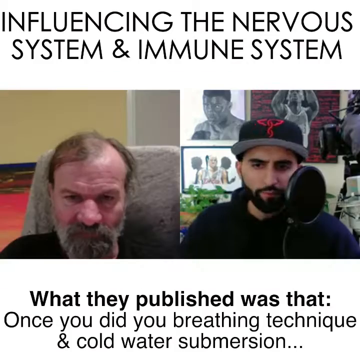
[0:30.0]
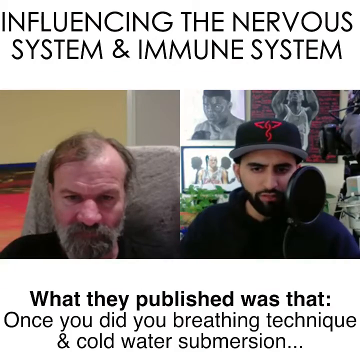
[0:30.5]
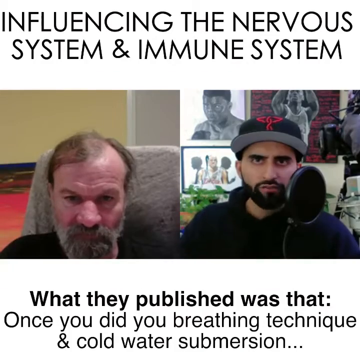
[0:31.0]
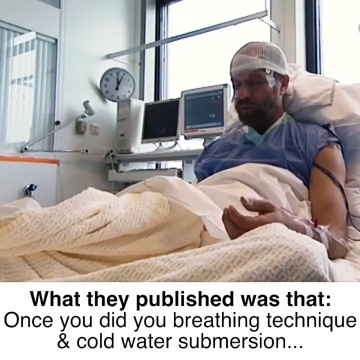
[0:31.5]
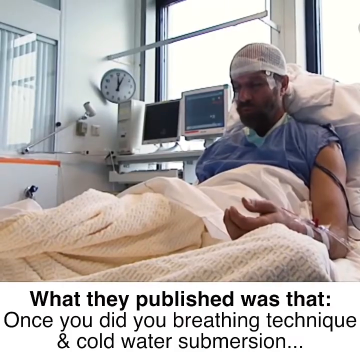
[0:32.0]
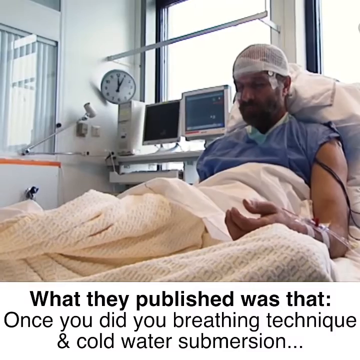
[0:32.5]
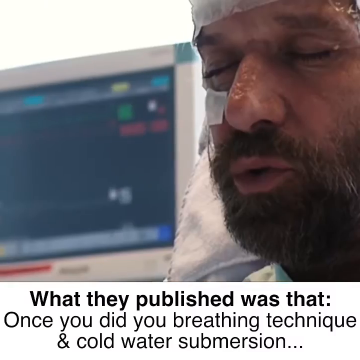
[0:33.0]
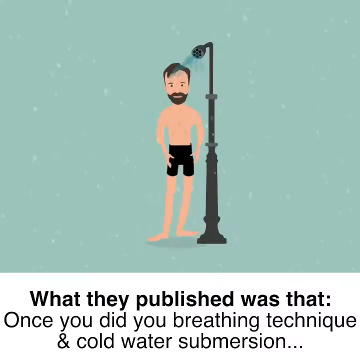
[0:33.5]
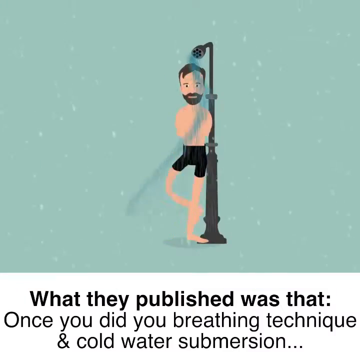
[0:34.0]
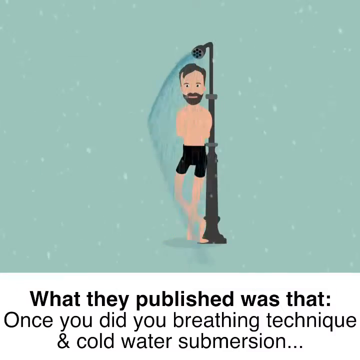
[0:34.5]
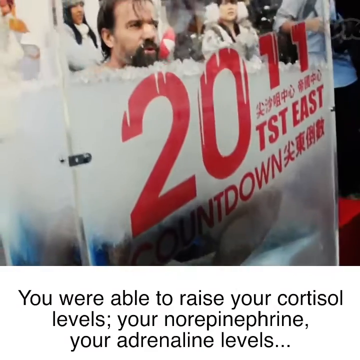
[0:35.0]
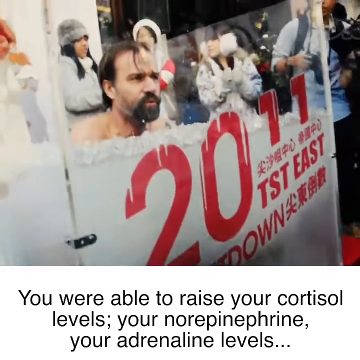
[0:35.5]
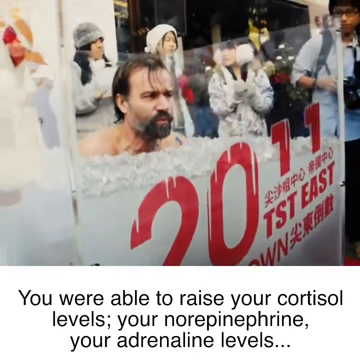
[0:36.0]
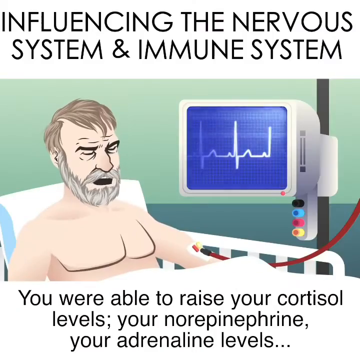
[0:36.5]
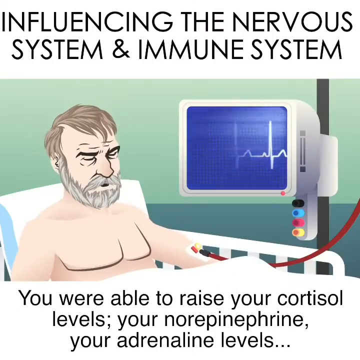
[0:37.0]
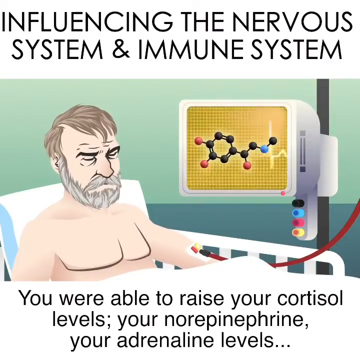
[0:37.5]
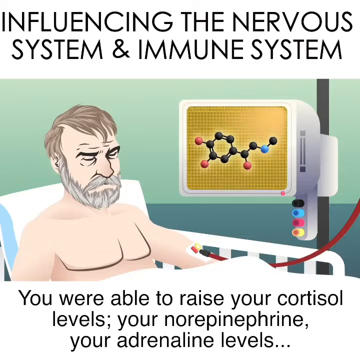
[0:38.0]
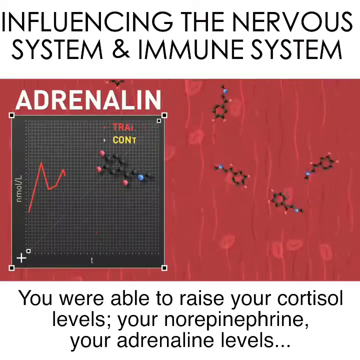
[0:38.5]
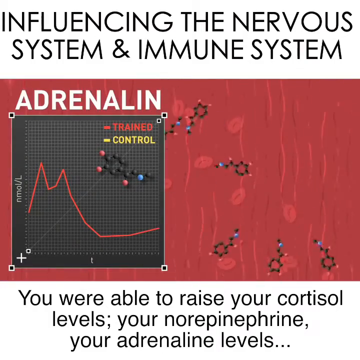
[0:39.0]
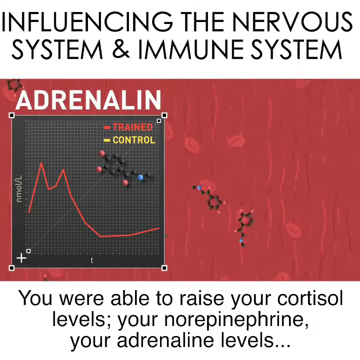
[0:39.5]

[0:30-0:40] The men who were talking appear, and then a man is in a hospital bed wearing a white cap and a blue hospital gown, apparently connected to a bunch of wires and underneath a white hospital blanket. Two computer monitors are behind him, along with a clock and an open window. A caption reads "what they published was that once you did you breathing technique in cold water submersion," followed by an animation of a man just standing in a shower with the water running down. Text reads "you were able to raise your cortisol levels, your norepinephrine, your adrenaline levels." An ice water submersion is shown: he is sitting in the middle of the floor while people stand around in jackets, coats and hats, so it is apparently very cold there. The text reads "you were able to raise your cortisol levels," then "your norepinephrine and your adrenaline levels." In the animation, the man sitting on the hospital bed is connected to a monitor and sort of breathing in and out slowly, with his levels shown on the computer monitor next to him. An animation reads "adrenaline," then "control" and "train," shown on a graph.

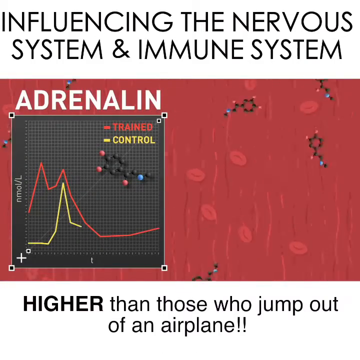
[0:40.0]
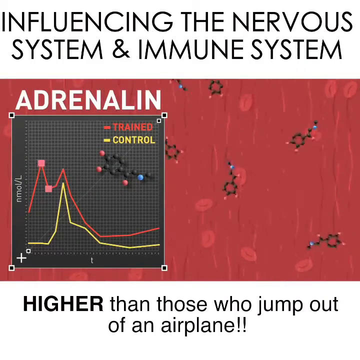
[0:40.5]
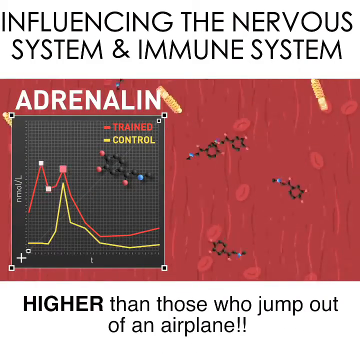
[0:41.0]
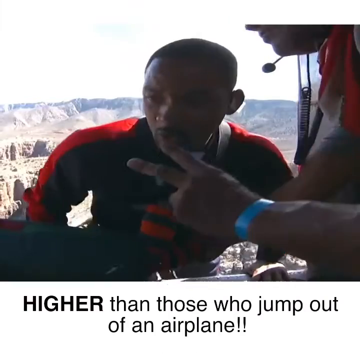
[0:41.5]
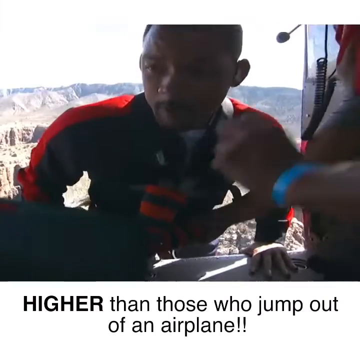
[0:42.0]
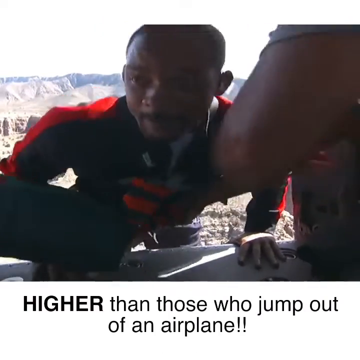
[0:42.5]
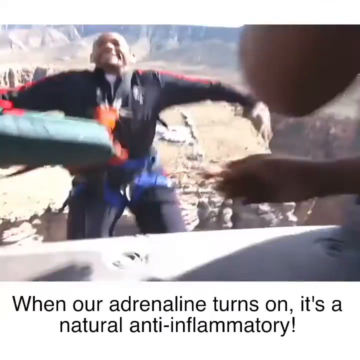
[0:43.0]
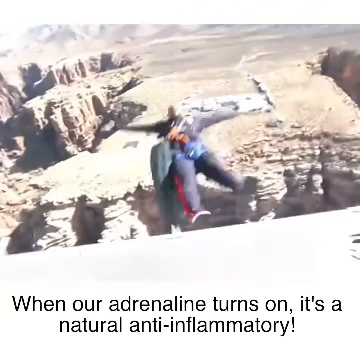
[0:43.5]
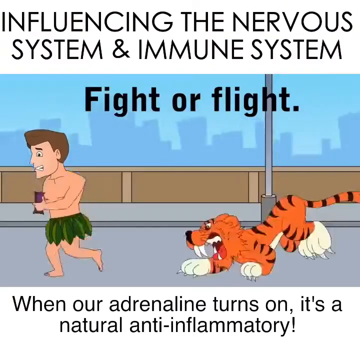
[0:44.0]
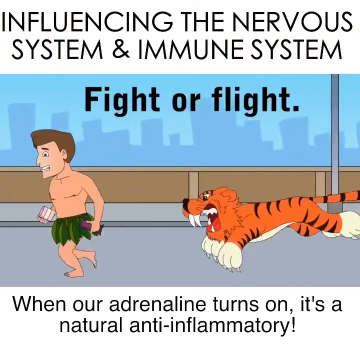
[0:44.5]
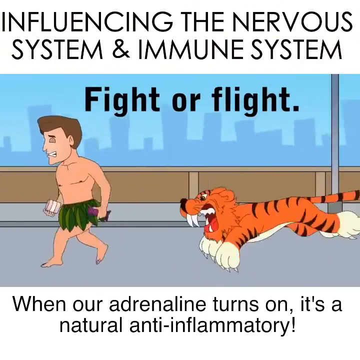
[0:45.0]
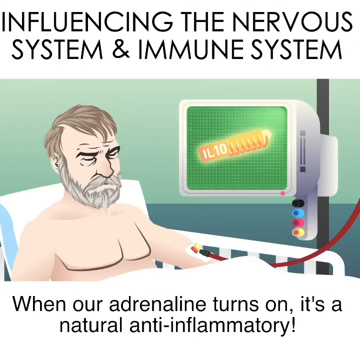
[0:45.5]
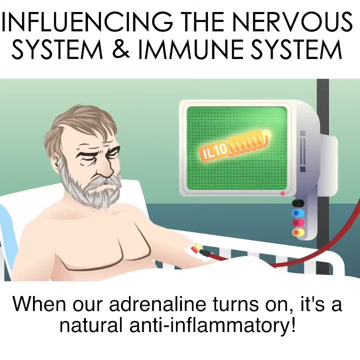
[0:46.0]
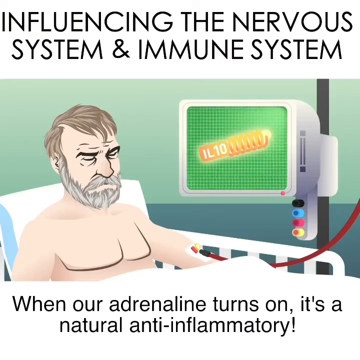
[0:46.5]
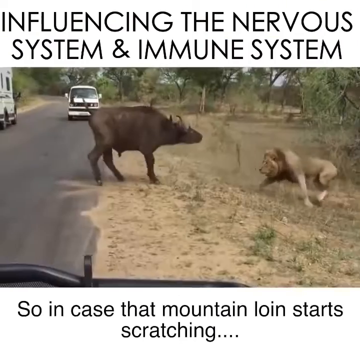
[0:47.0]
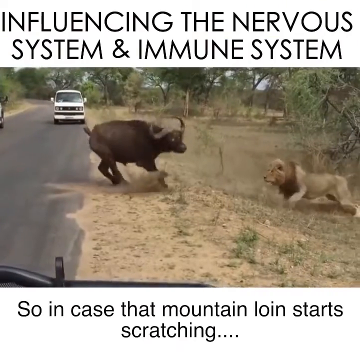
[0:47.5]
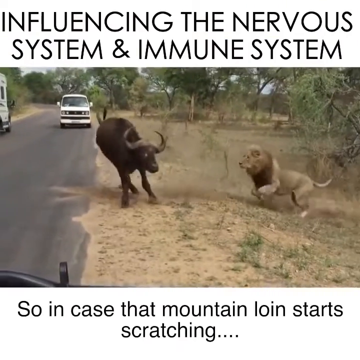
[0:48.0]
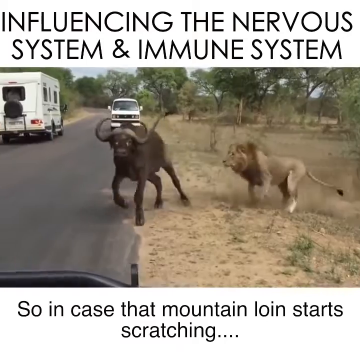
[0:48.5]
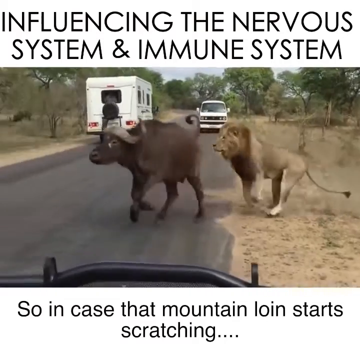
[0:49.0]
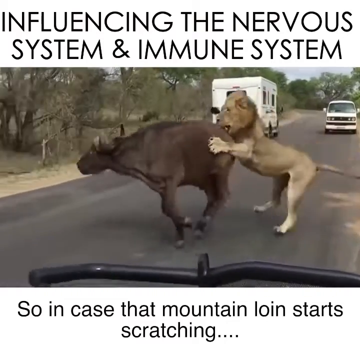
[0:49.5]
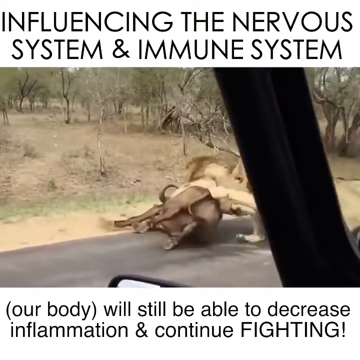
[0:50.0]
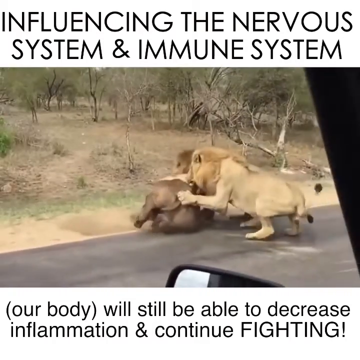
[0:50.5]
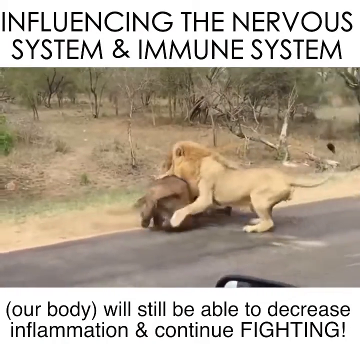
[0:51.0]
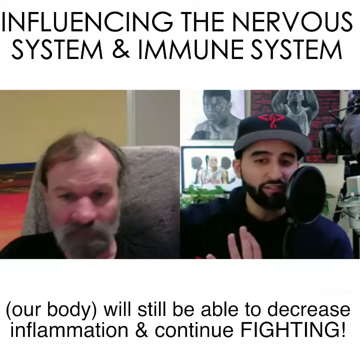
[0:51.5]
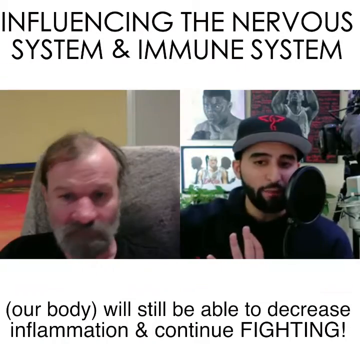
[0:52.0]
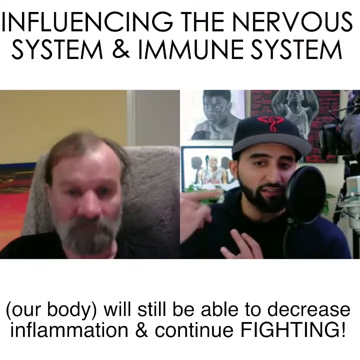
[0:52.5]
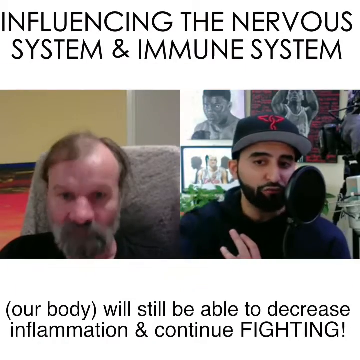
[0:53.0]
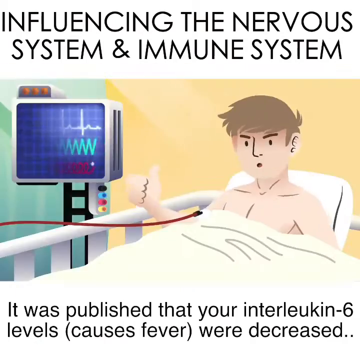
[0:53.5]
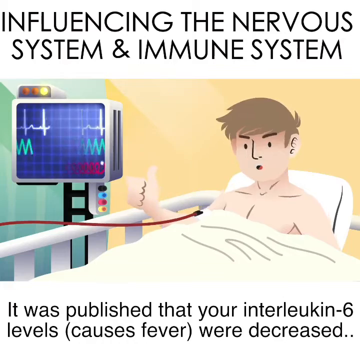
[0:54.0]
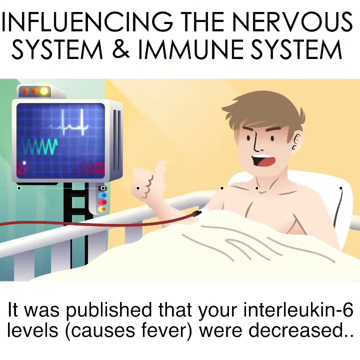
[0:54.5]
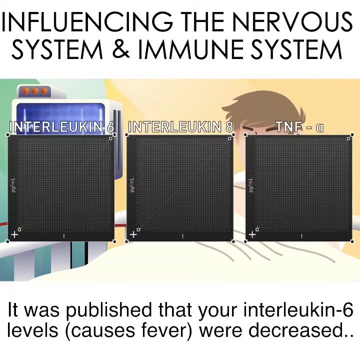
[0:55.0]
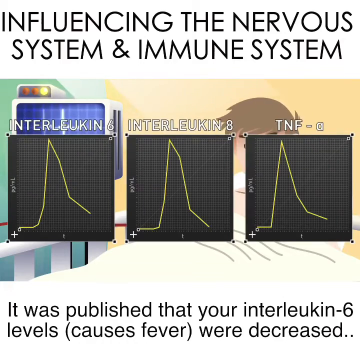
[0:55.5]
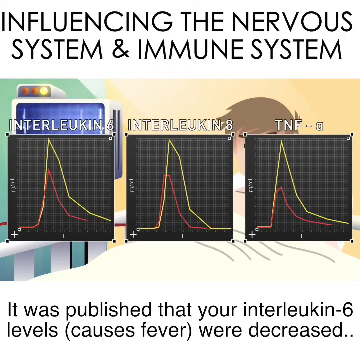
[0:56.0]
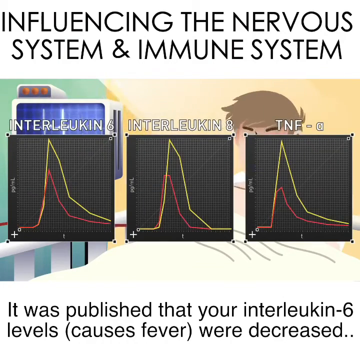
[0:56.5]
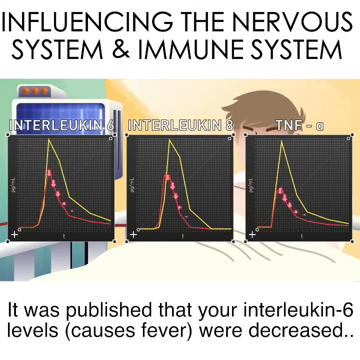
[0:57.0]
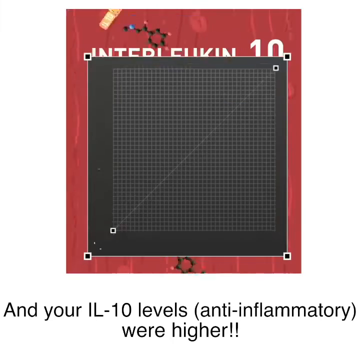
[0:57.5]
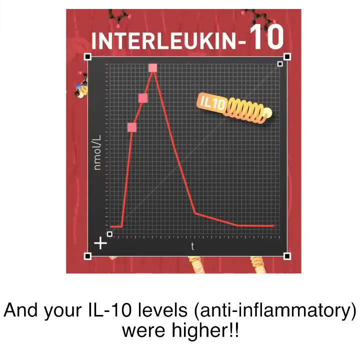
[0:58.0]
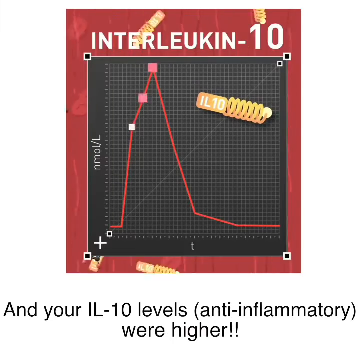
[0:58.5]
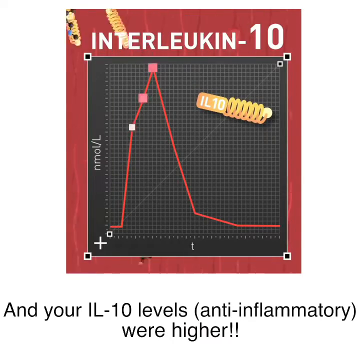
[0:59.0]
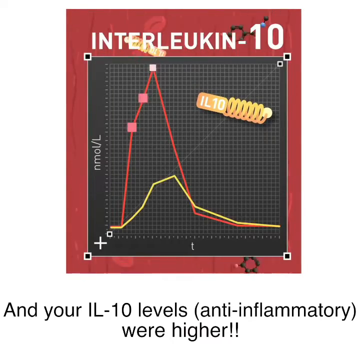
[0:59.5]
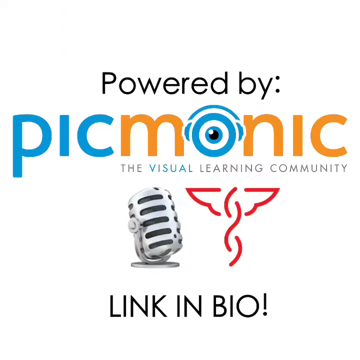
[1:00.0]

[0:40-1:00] The graph shows "adrenaline" with train and control, and a caption reads "higher than those who jump out of an airplane." A graphic shows a man, apparently Will Smith, about to jump out of an airplane or helicopter; he looks pretty scared and wears a red and black striped suit. He is sort of being hung over the edge and then pushed, and he has the parachute on his front. A caption reads "when our adrenaline turns on, it's a natural anti-inflammatory," along with "fight or flight," as a man in a grass skirt is chased by a tiger. The video returns to the man in the hospital bed, whose screen says "IL-10" with something like a gold coil. Text reads "so in case that mountain lion starts scratching," over a short clip of a lion chasing what looks like a ram or a bull; the lion grabs it on its back, sort of bites its back area or rear, and the bull goes down. The next page reads "our body will still be able to decrease inflammation and continue fighting." The two men on the video call are shown chatting, and text reads "it was published that your interleukin-6 levels causes fever were decreased." Three graphs are labeled interleukin-6, interleukin-8 and apparently TNF-C. Interleukin-10 is shown with the text "and your IL-10 levels anti-inflammatory were higher." The video ends with the sponsor, reading "powered by PicMonic, the visual learning community," with a microphone in the medical symbol and the text "link in bio."